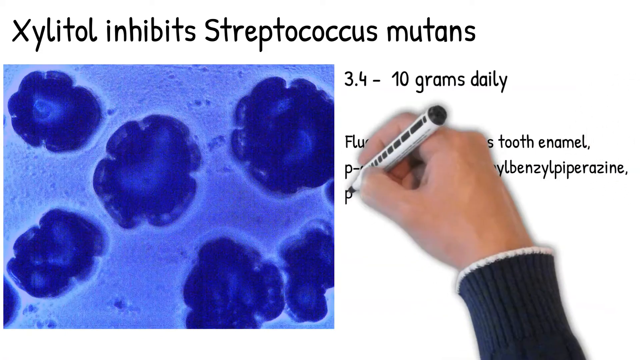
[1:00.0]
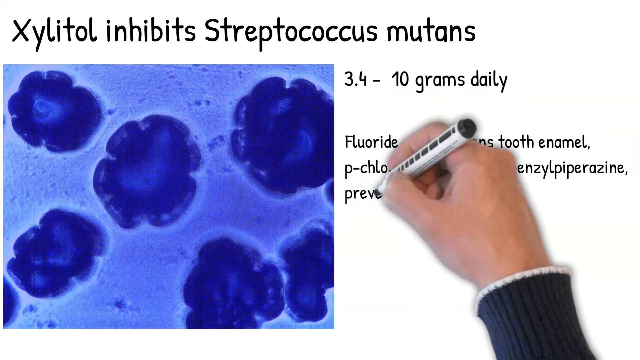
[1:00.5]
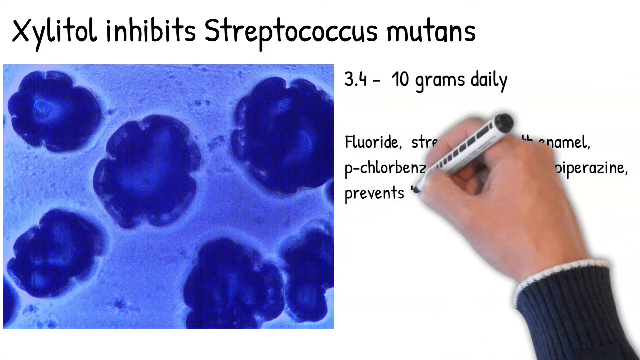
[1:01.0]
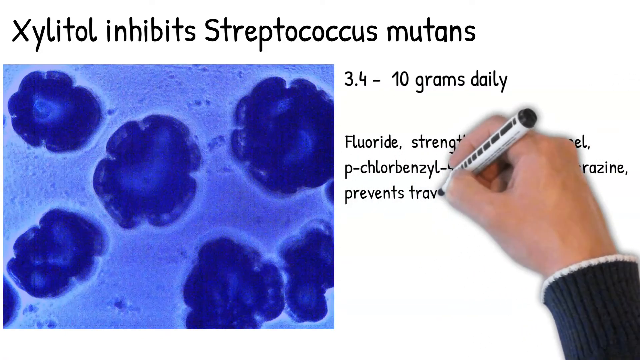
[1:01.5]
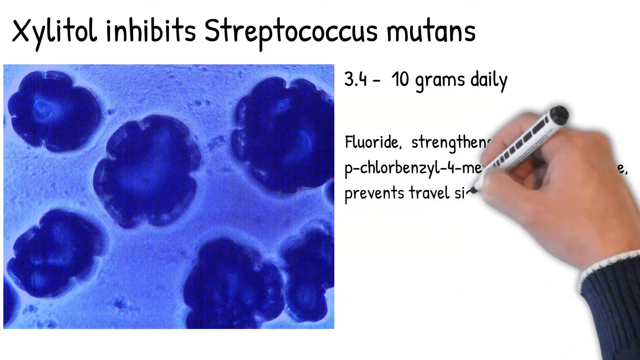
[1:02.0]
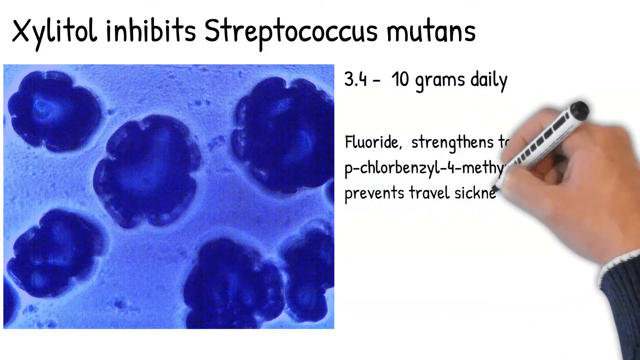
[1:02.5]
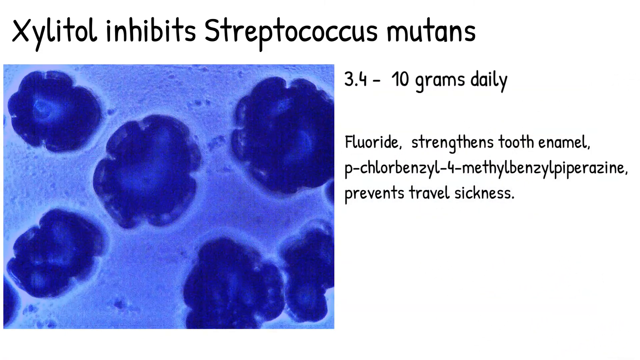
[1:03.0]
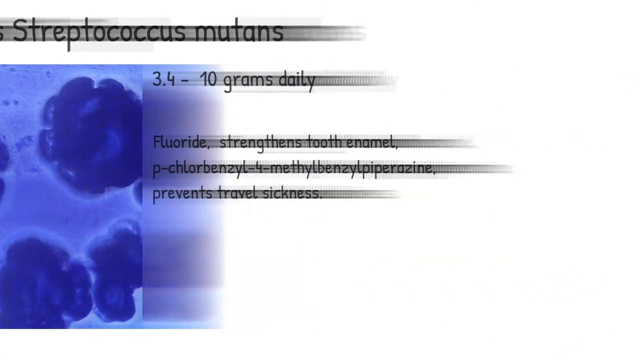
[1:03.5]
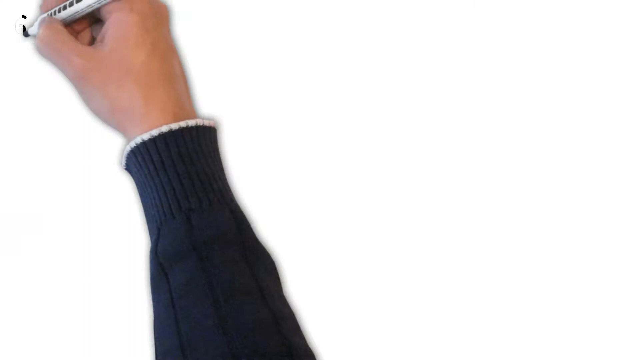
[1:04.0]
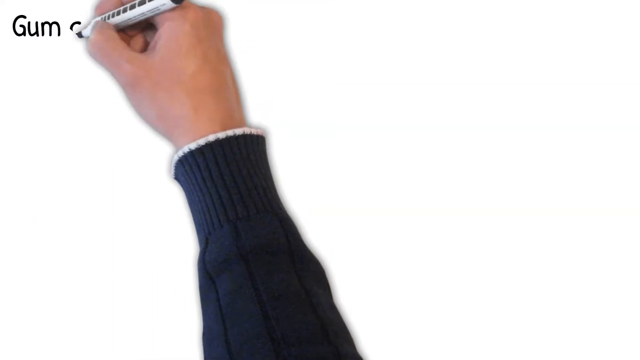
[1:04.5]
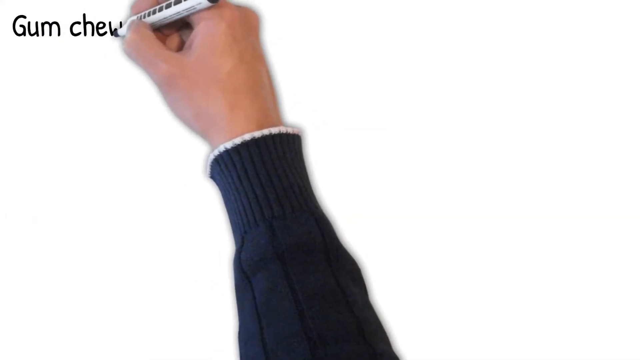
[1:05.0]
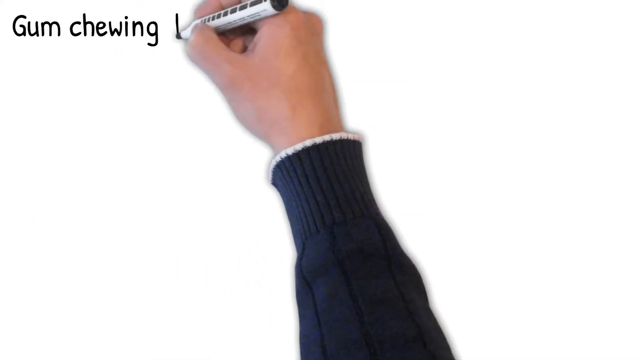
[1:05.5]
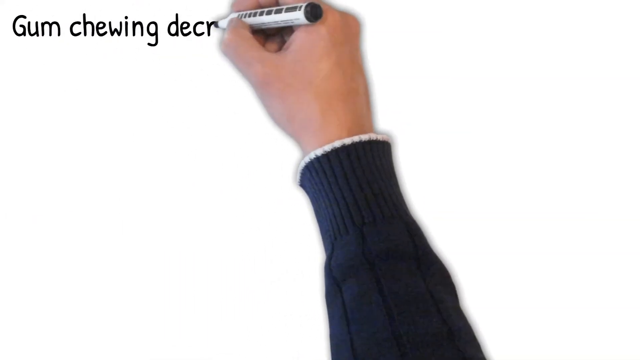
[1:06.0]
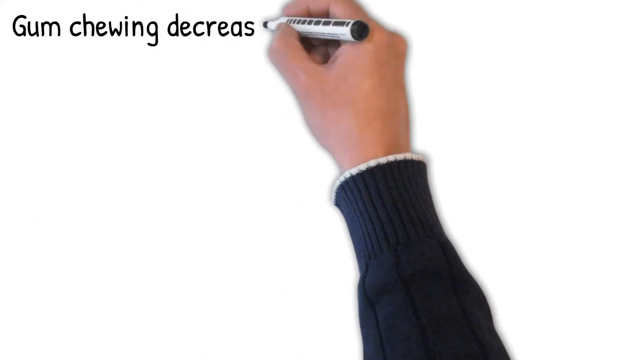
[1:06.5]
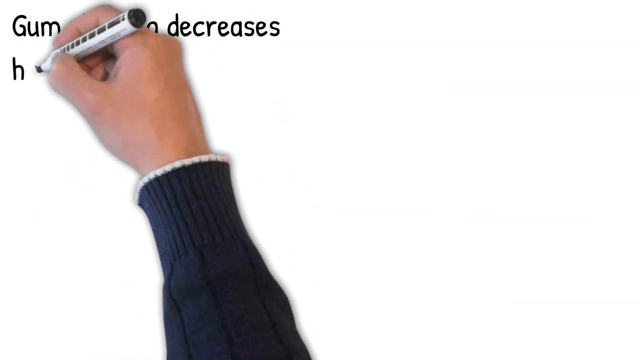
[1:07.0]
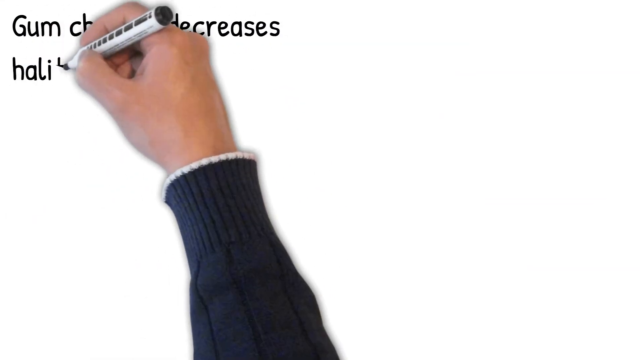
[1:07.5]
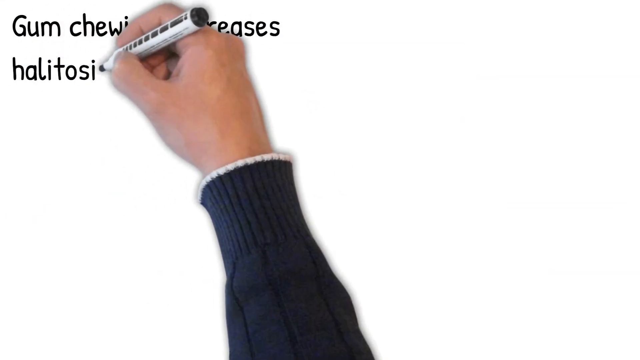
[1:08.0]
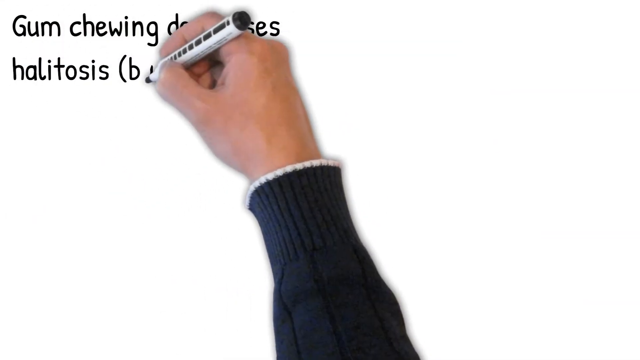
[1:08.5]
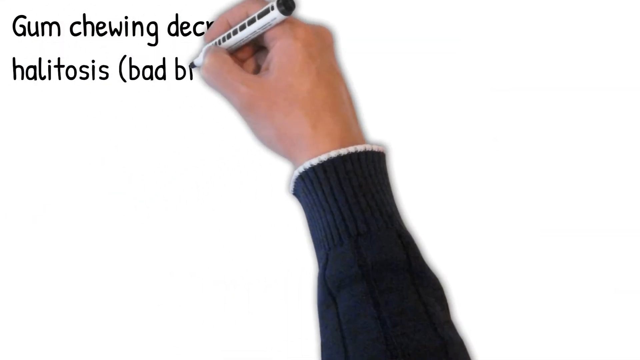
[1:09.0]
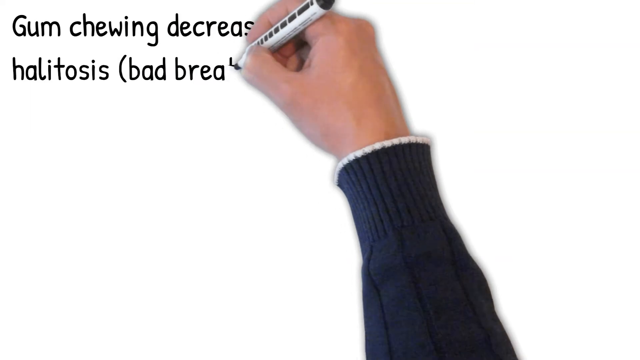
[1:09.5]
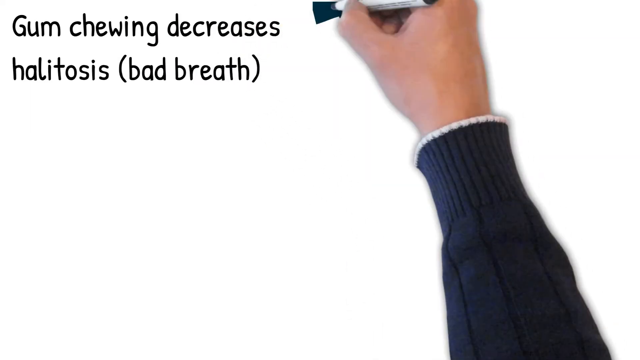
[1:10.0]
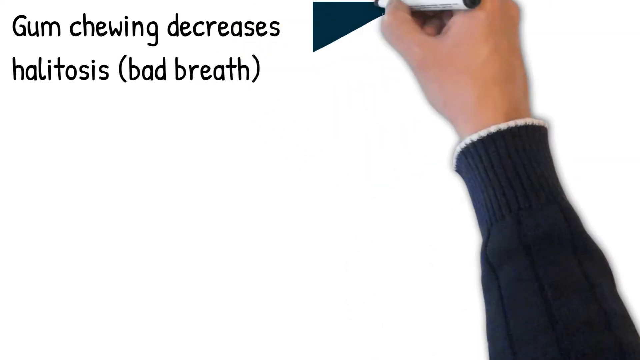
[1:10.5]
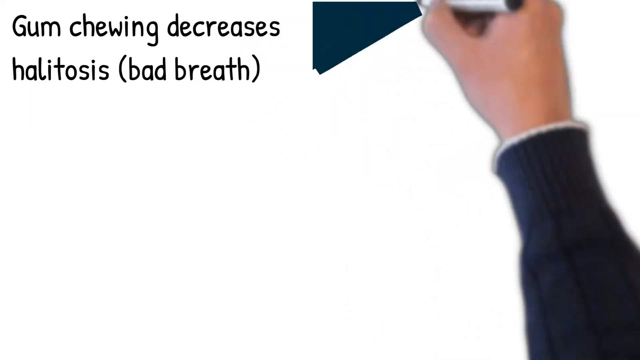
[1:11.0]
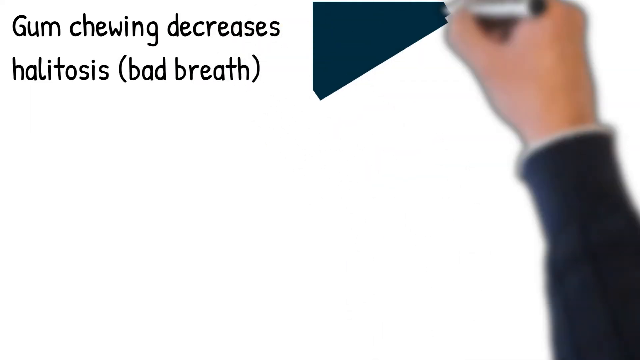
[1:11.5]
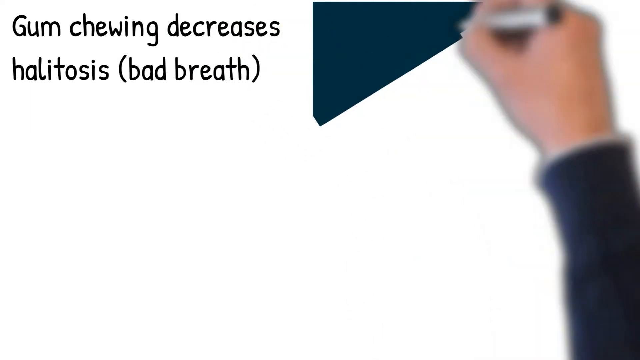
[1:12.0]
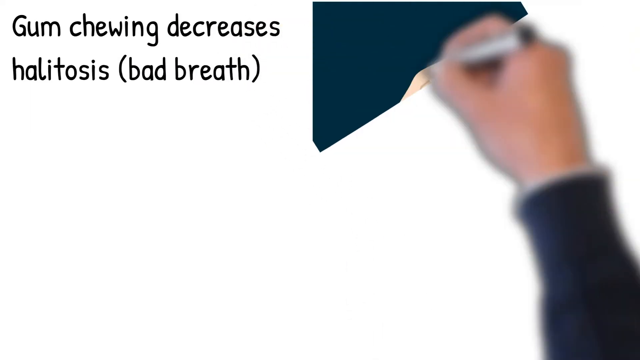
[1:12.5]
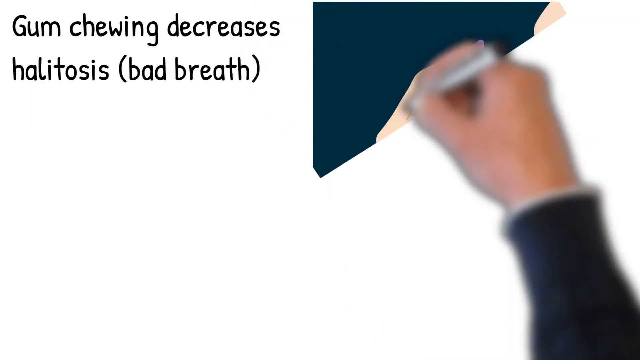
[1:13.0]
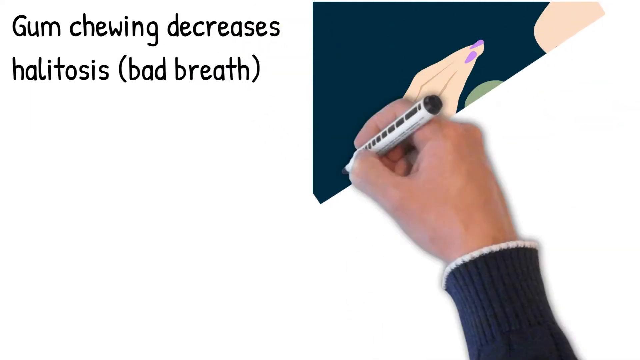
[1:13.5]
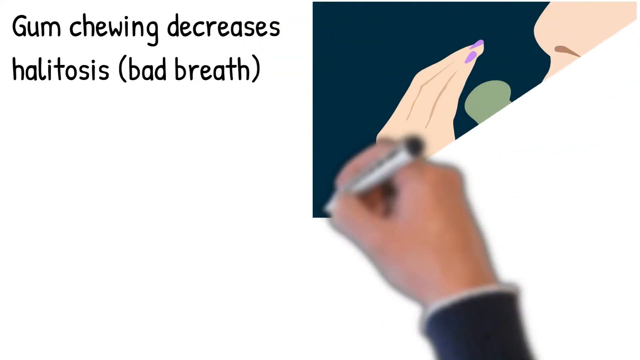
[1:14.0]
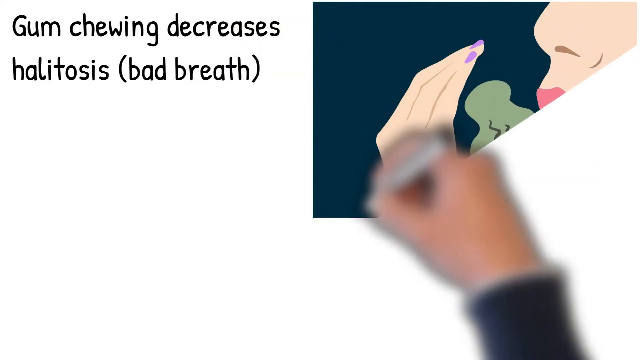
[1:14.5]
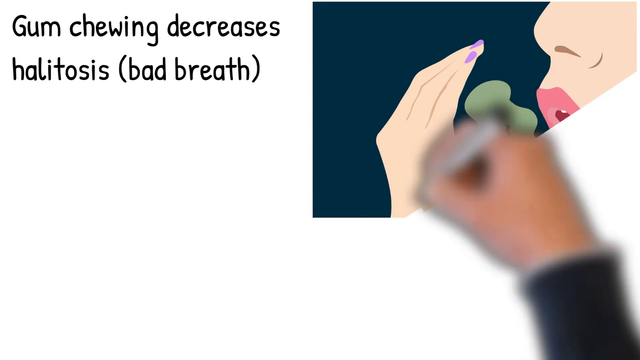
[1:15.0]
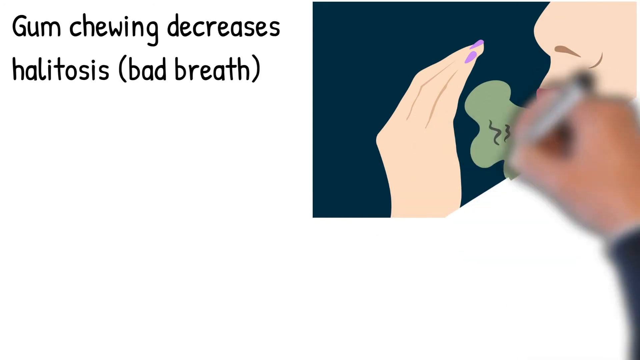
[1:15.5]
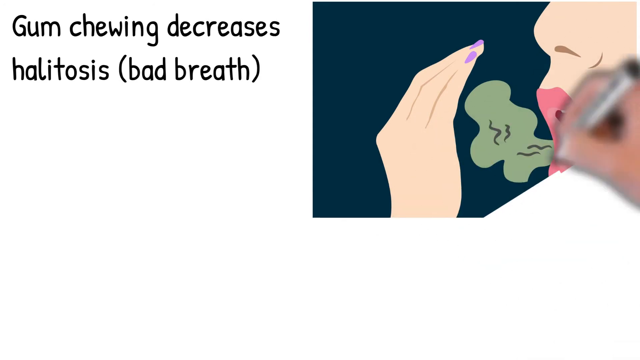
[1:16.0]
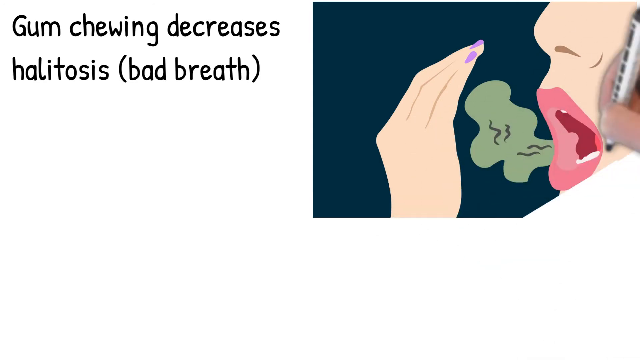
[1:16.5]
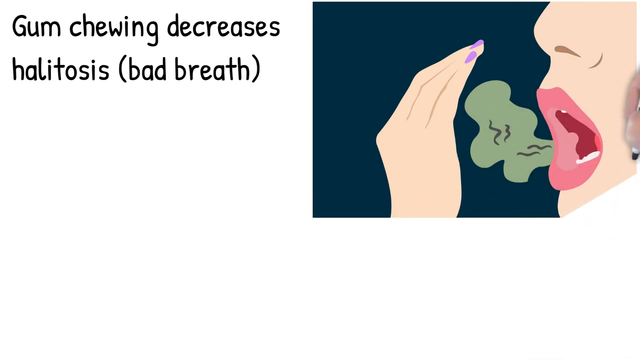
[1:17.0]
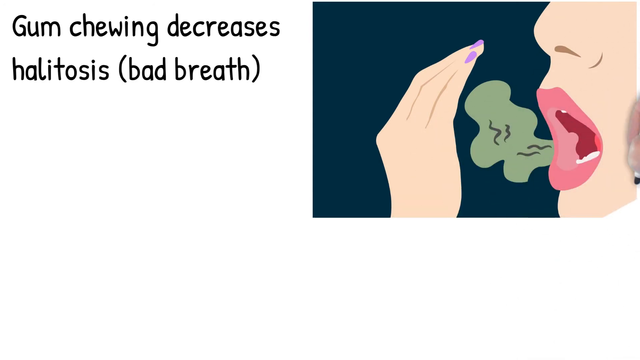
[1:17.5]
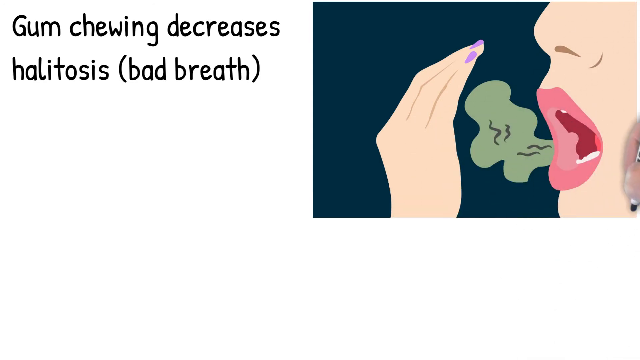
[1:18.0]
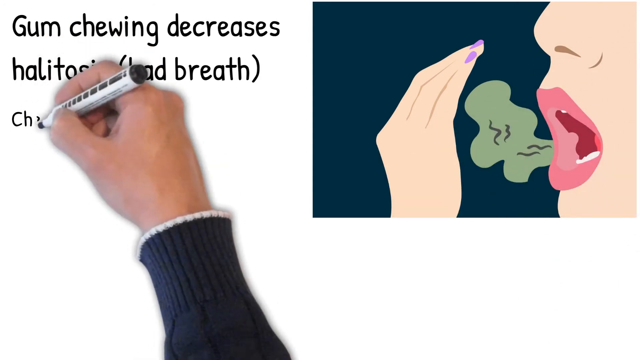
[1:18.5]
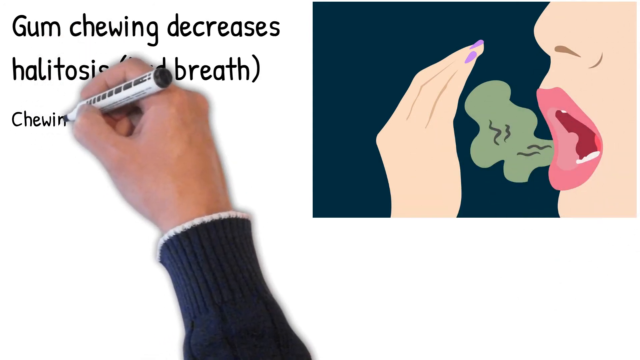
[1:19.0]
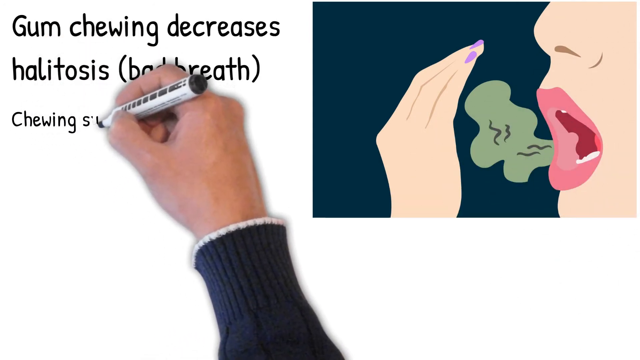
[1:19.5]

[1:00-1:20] The hand moves to a separate line and writes "prevents travel sickness". The whole image then sweeps to the left, returning to a blank white screen. The hand goes back to the top left-hand corner and writes "chewing gum decreases halitosis, bad breath". It then moves to the right and scribbles from the left down to the middle right, revealing a cartoon stock image: a hand on the left-hand side of the square, bad breath symbolized in green, and on the far right the lower face of a woman, showing her nose and mouth. She breathes onto her cupped hands and the breath is a dark green color. The image of the woman has a dark blue-green background and her nails are painted light purple. It is a very basic cartoon-style image with very little detail. The hand then returns to the left and begins to write "chewing sugar".